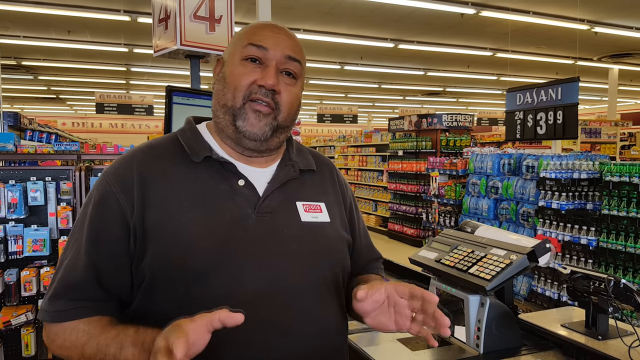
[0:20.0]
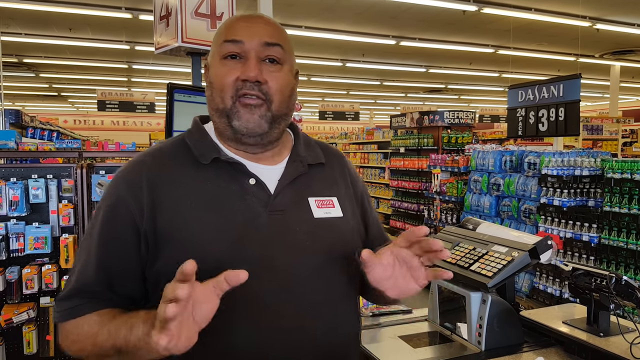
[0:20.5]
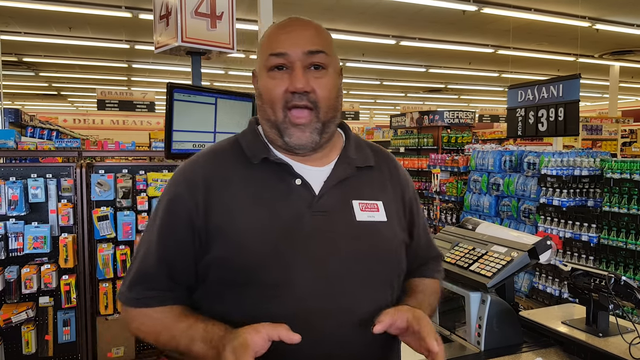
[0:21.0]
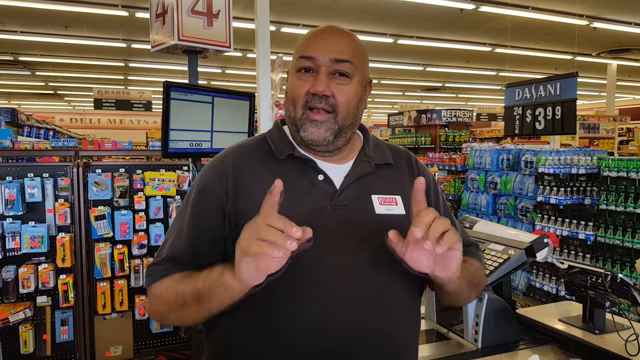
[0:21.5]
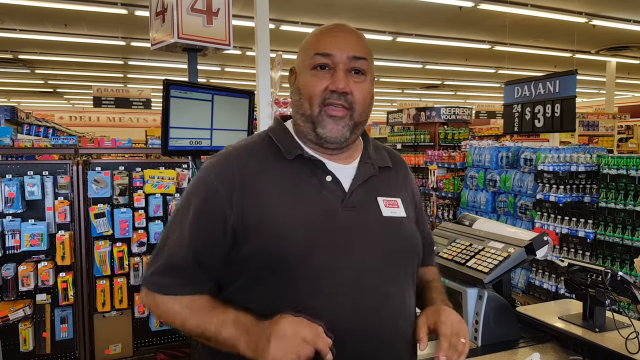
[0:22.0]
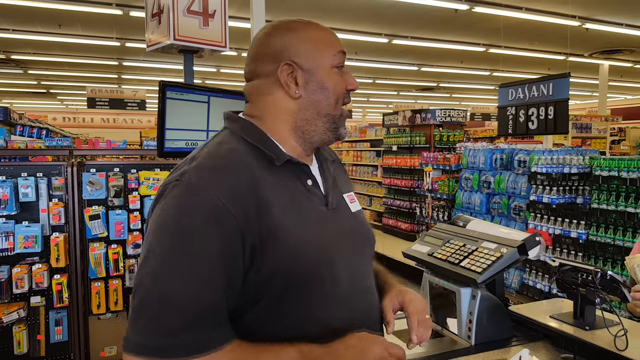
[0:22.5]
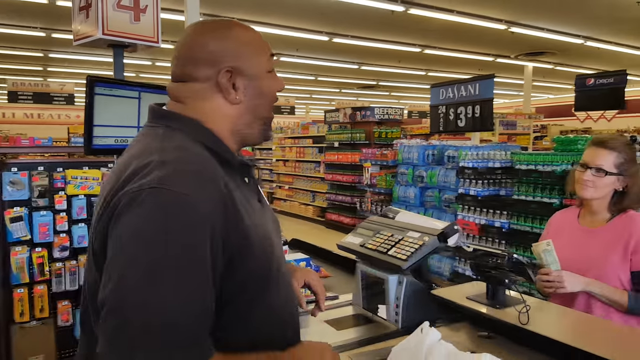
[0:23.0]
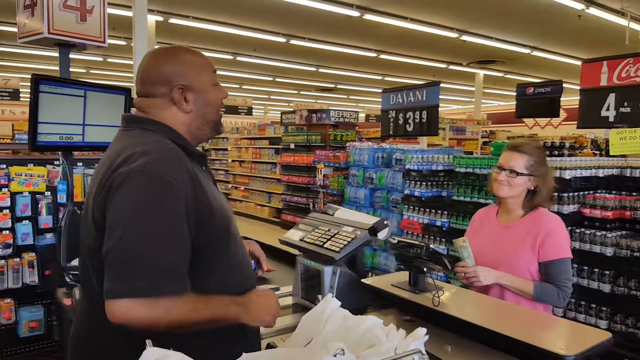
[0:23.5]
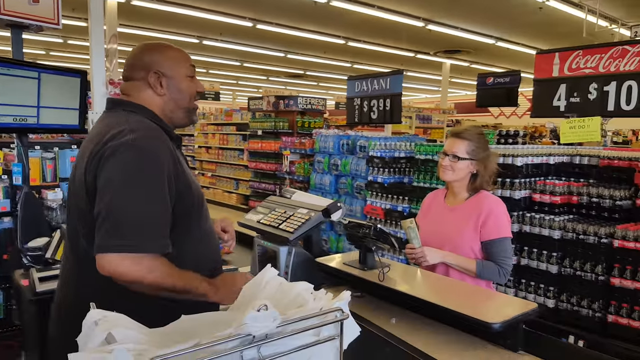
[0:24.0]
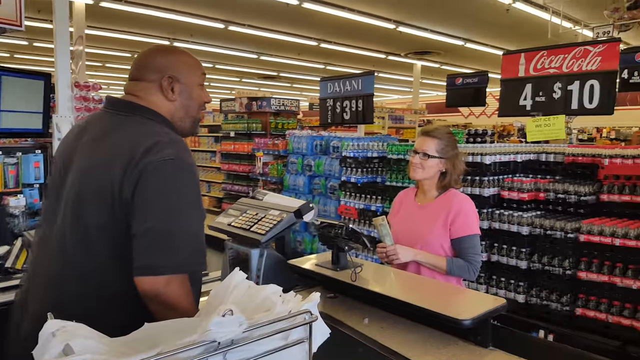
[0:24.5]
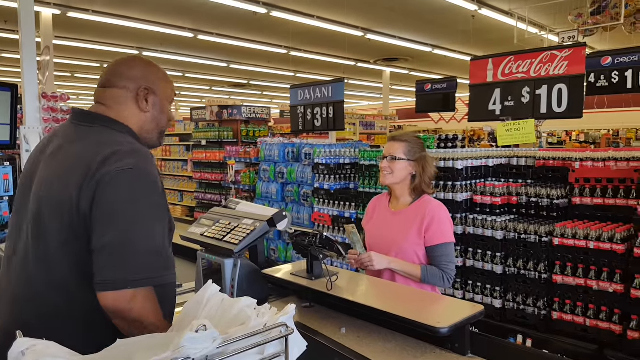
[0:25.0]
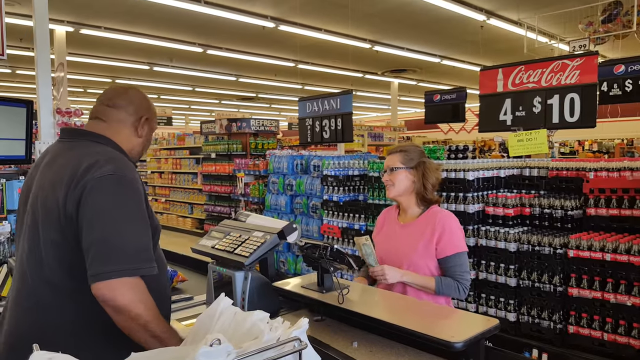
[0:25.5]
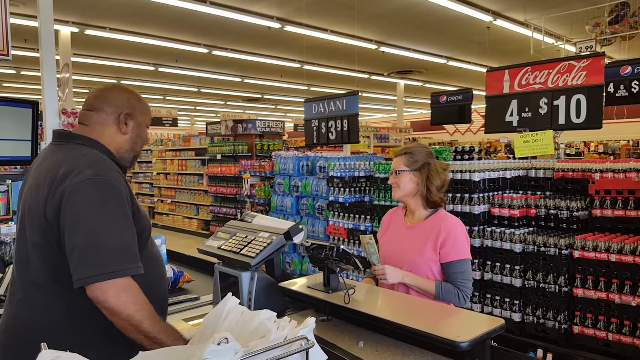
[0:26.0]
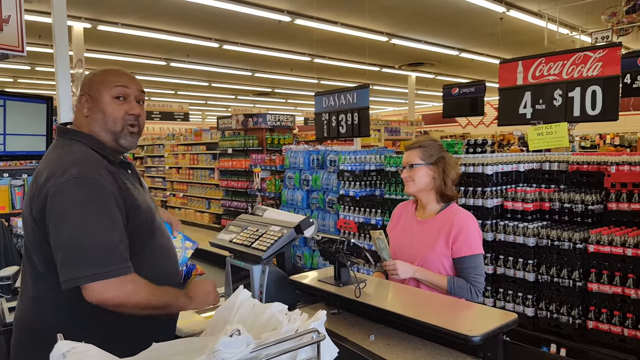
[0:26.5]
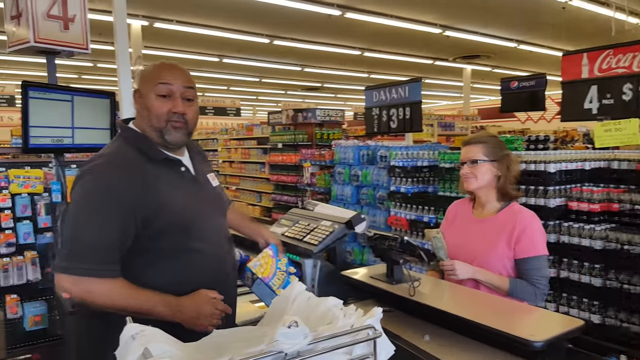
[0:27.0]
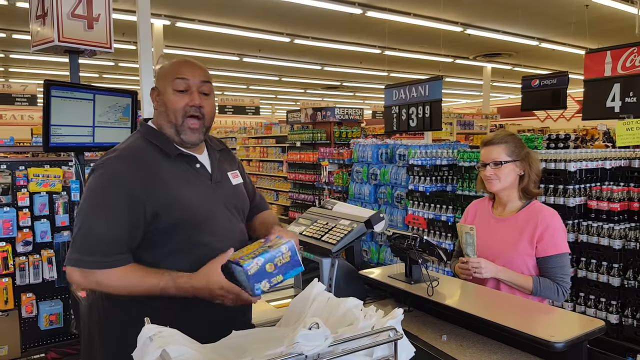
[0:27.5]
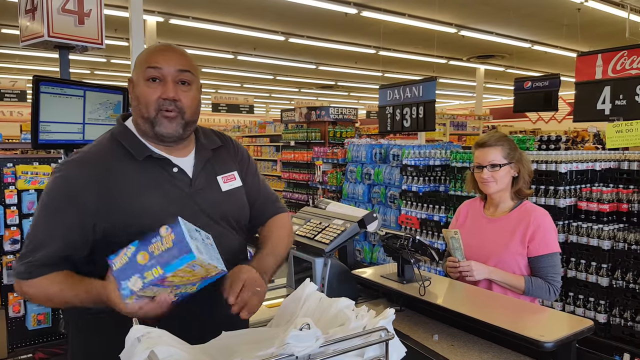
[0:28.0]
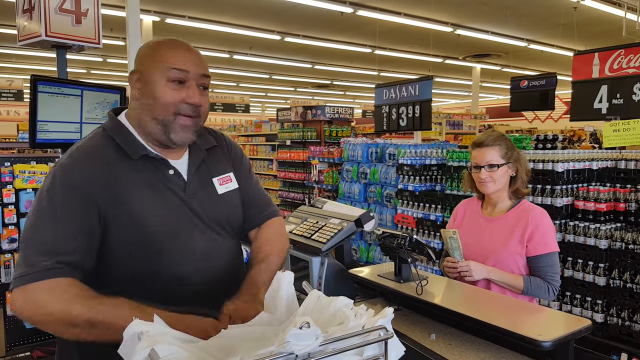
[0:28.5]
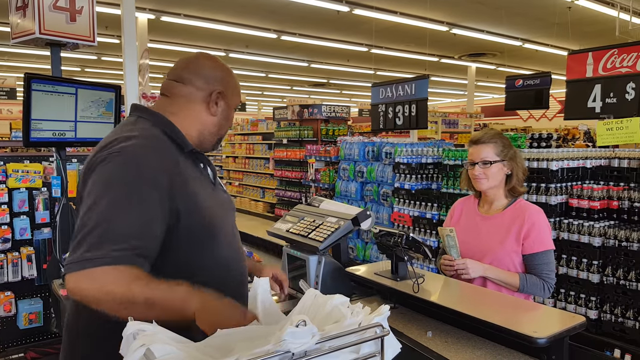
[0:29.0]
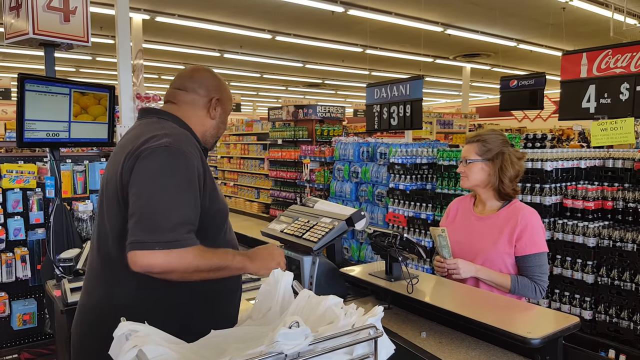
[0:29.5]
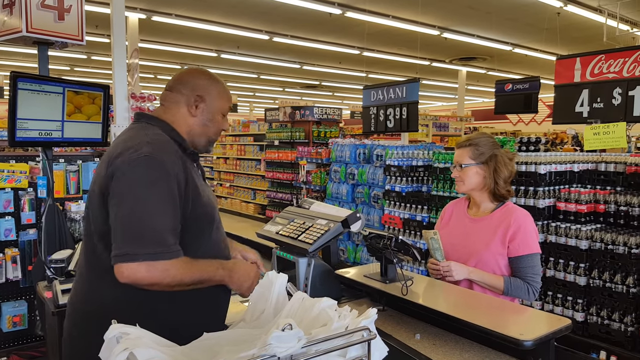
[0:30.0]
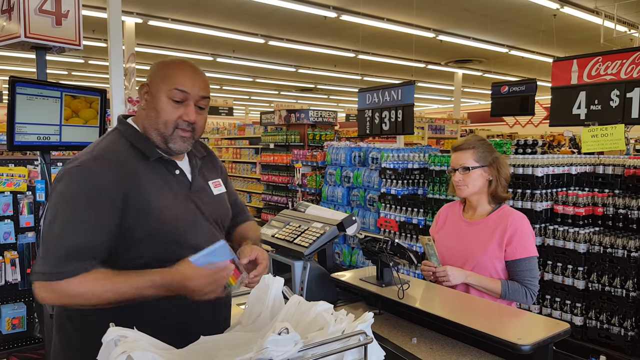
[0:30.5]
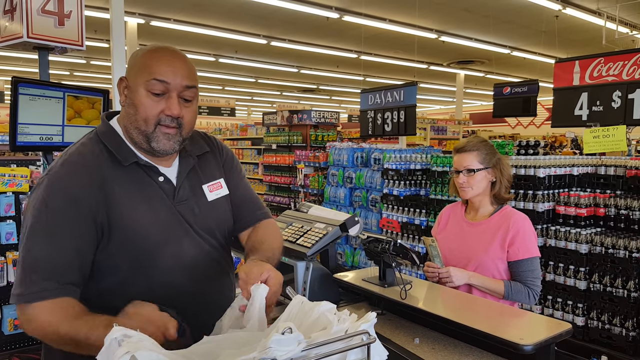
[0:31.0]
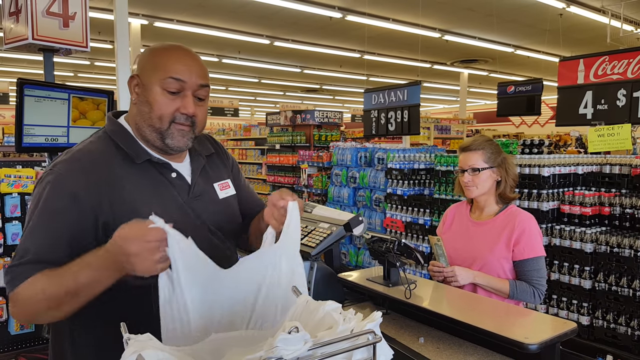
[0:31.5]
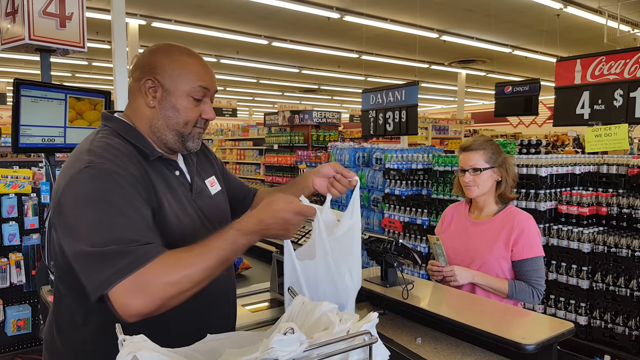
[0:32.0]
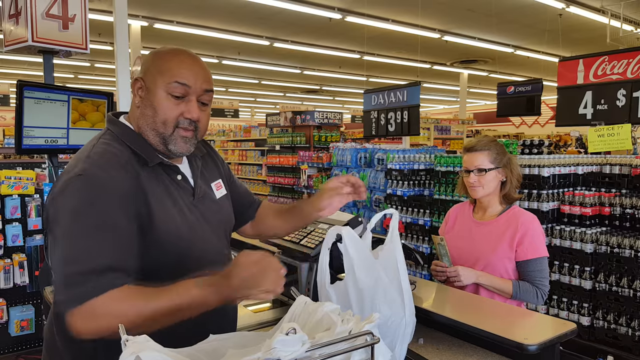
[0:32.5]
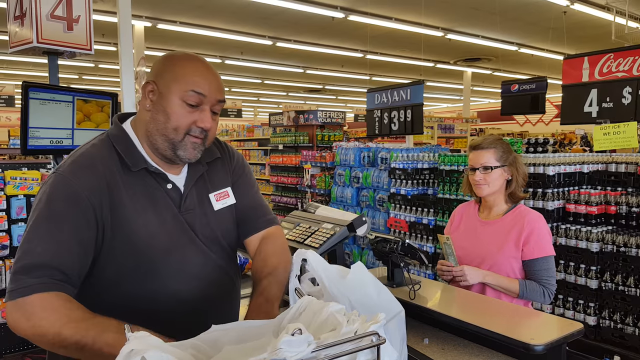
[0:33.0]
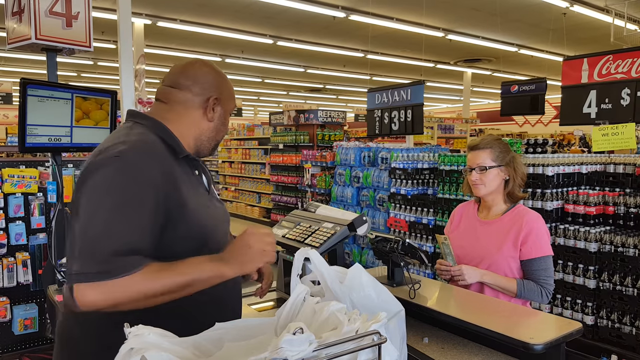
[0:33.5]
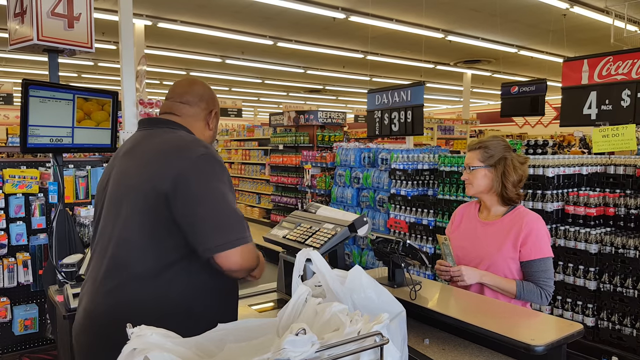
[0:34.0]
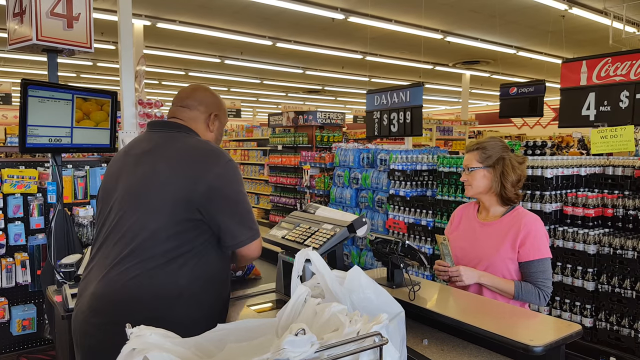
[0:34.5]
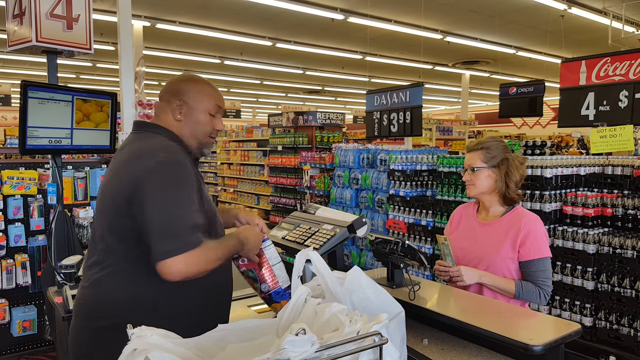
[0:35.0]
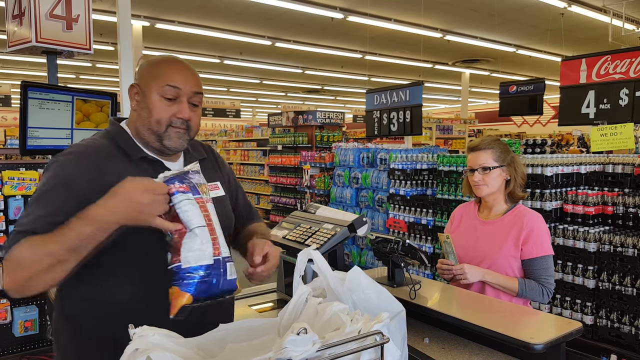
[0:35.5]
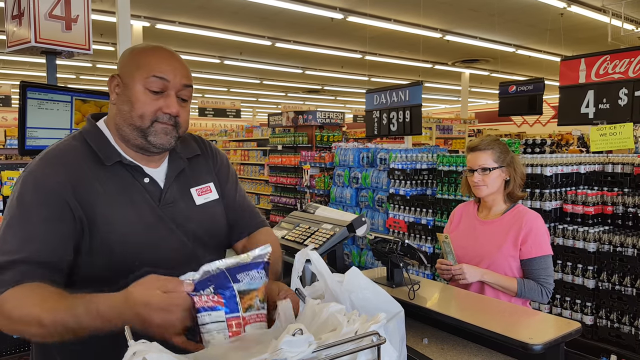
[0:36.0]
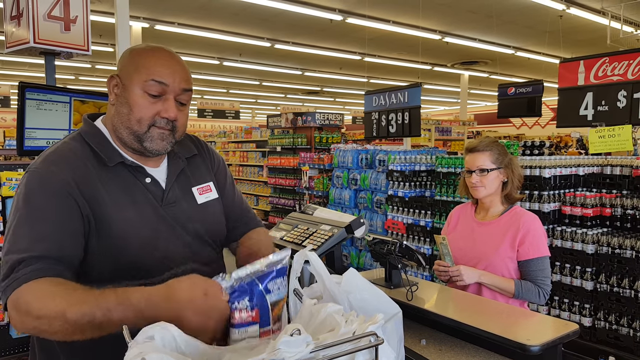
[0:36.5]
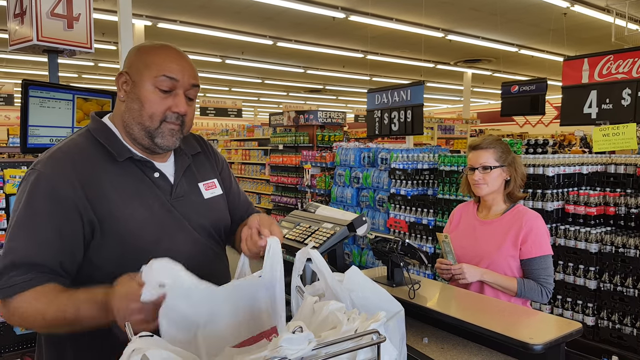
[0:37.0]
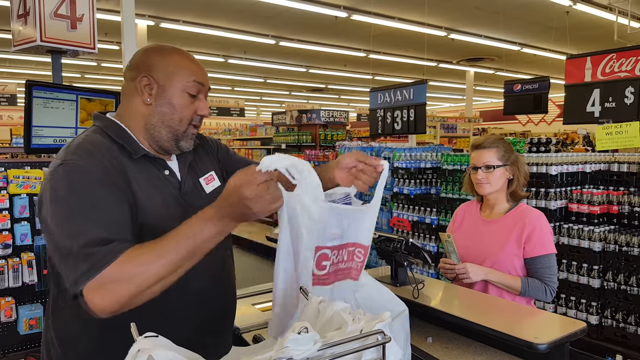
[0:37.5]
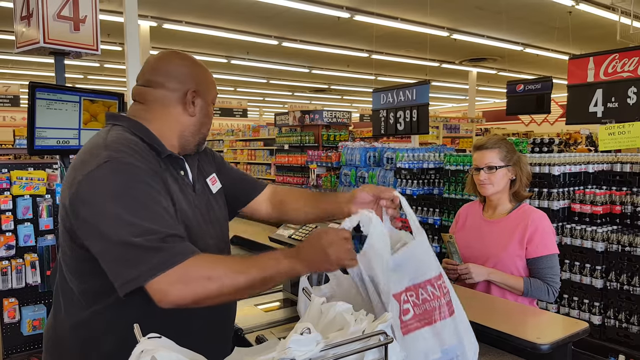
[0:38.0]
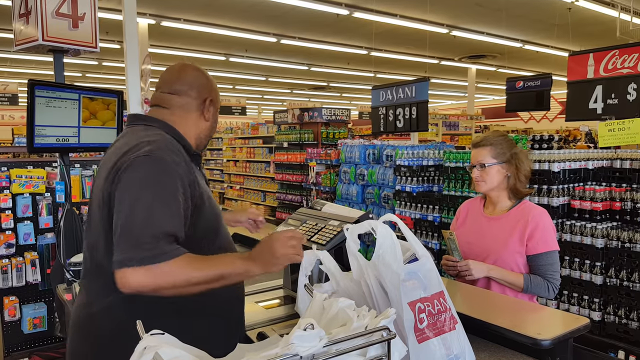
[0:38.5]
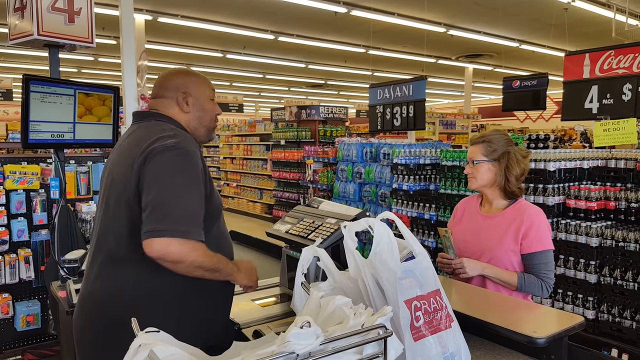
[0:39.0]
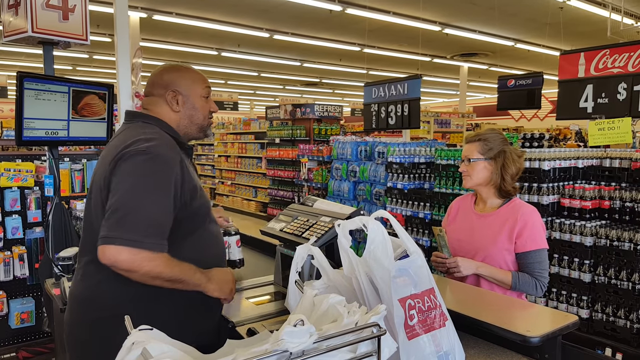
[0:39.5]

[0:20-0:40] The grocery clerk keeps talking, then turns to his left, toward the right side of the frame, so that he is now on the left side of the screen. He talks to a customer across the counter who looks at him with money in her hand. She is a woman in a pink shirt, apparently worn over a gray long-sleeve shirt, and she is holding a $10 bill. The cashier starts scanning her groceries. First is a box of popcorn, which he puts into the plastic bag next to him. There is another item; he takes out the bag and places it to the side. He scans a bag of potato chips, puts it in a bag, takes out the bag and places it to the side, then grabs a six-pack of Diet Pepsi bottles and scans them. The video appears to be some sort of tutorial on how to be a cashier for this grocery store.